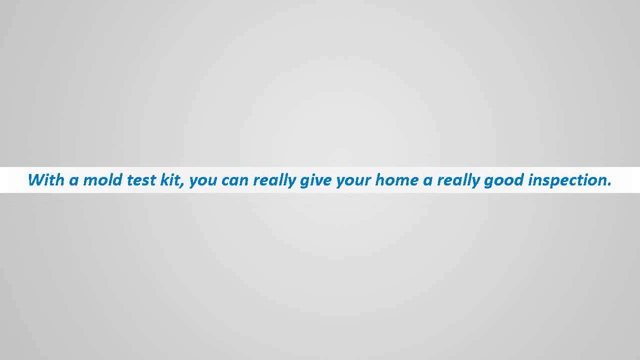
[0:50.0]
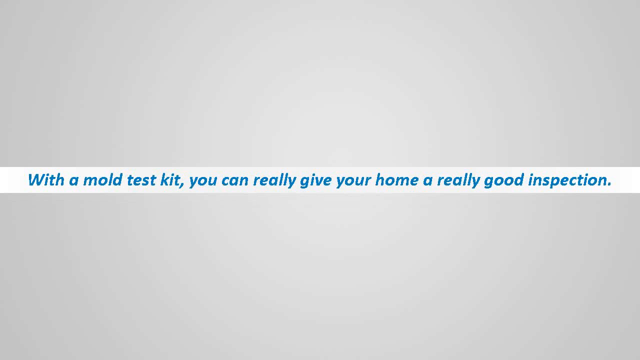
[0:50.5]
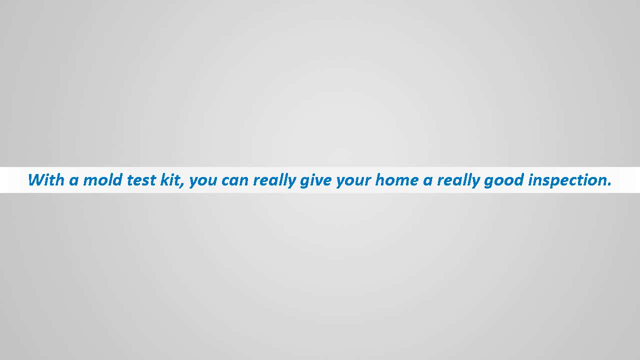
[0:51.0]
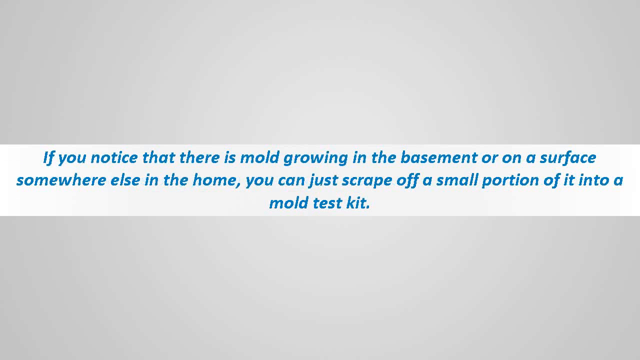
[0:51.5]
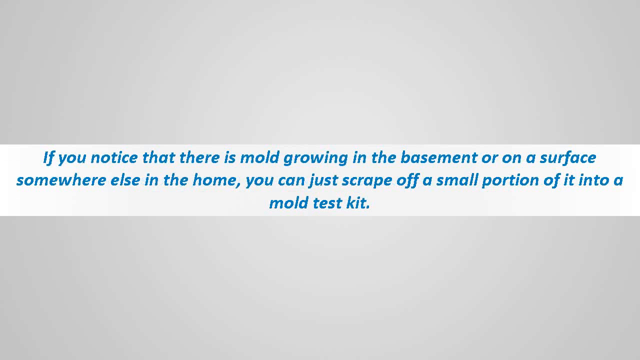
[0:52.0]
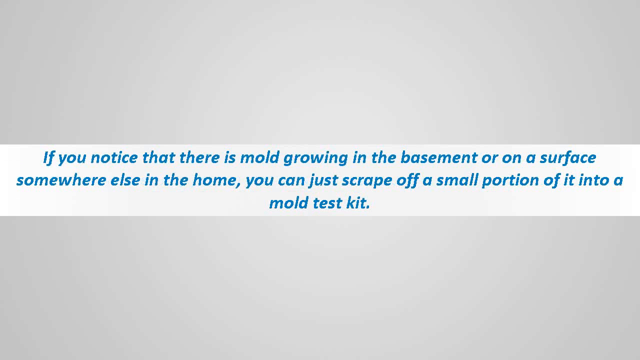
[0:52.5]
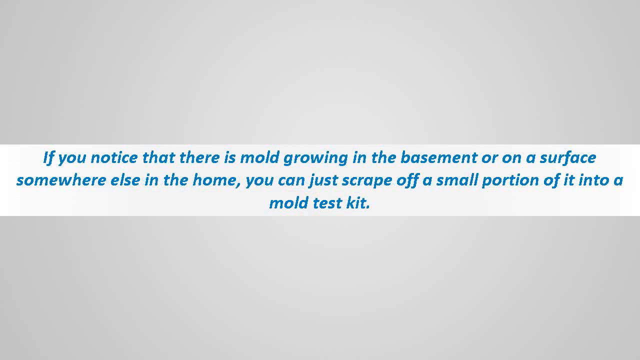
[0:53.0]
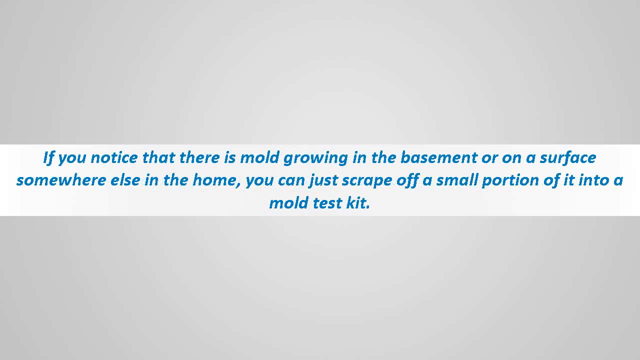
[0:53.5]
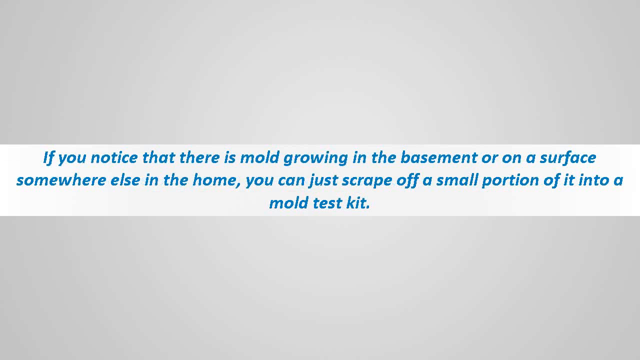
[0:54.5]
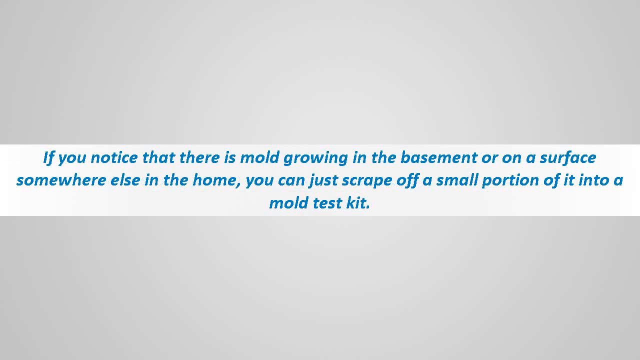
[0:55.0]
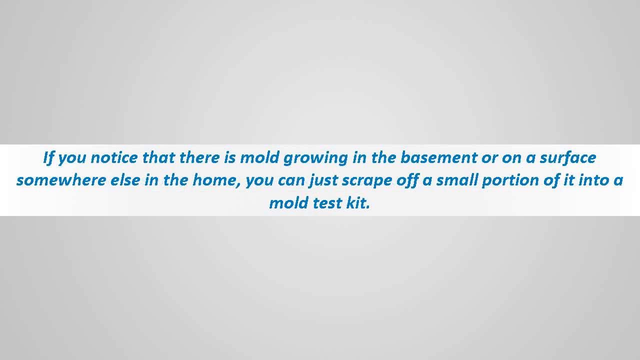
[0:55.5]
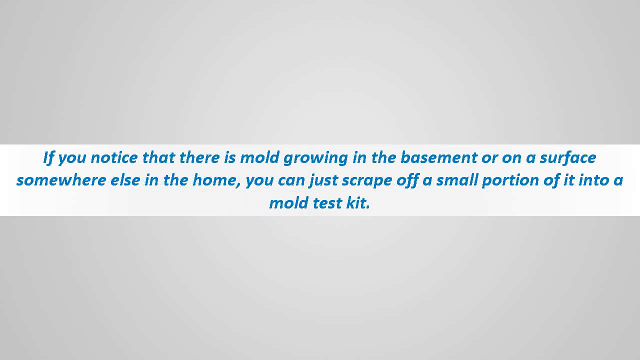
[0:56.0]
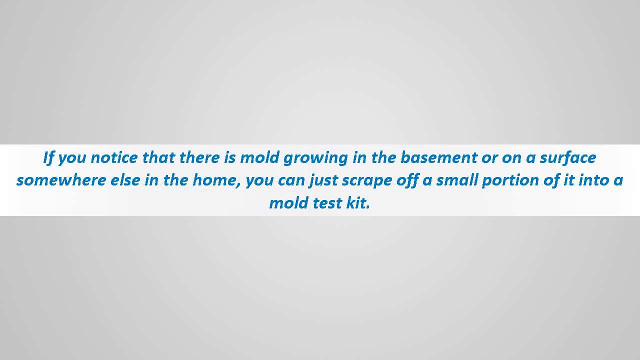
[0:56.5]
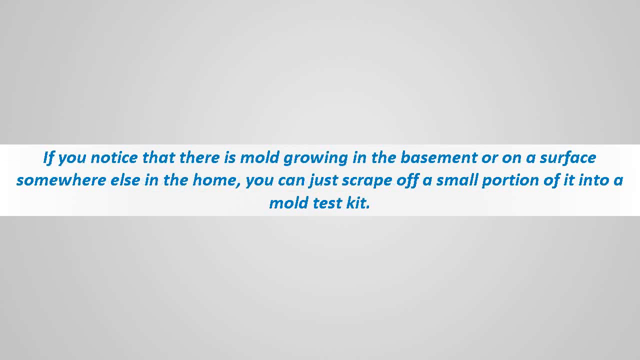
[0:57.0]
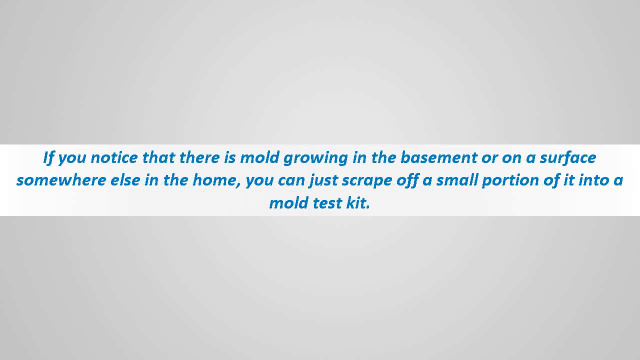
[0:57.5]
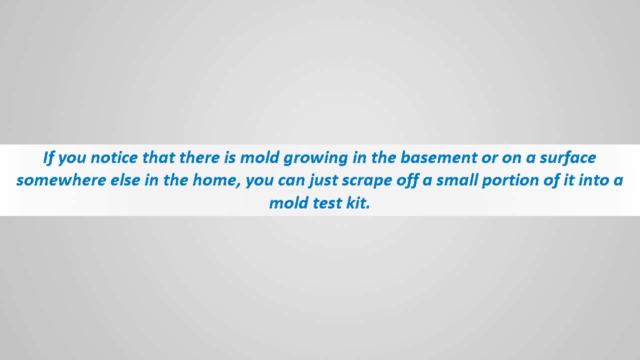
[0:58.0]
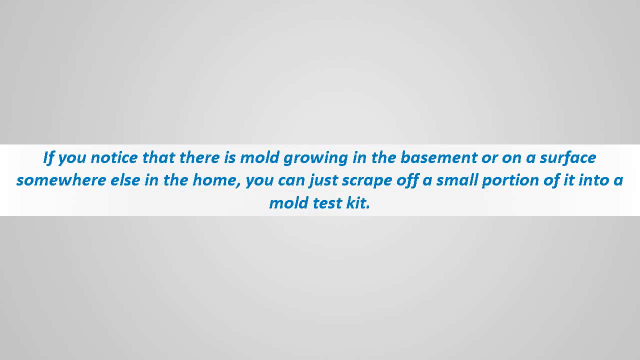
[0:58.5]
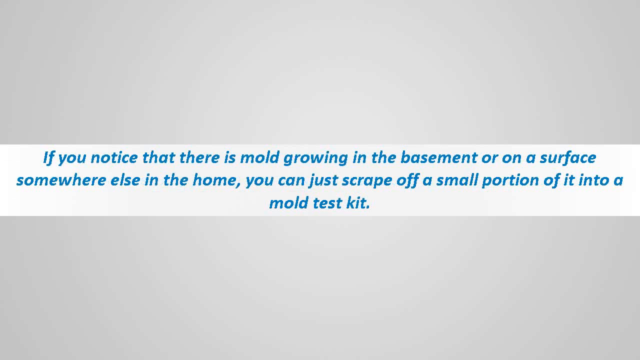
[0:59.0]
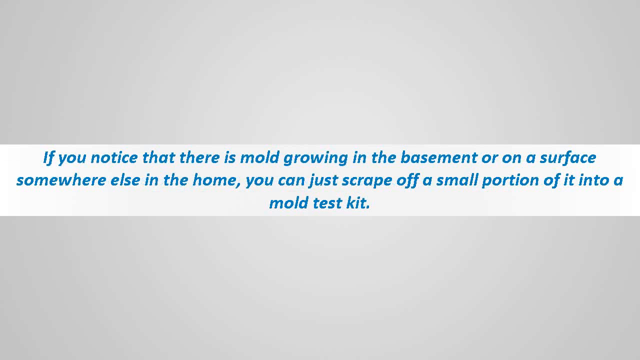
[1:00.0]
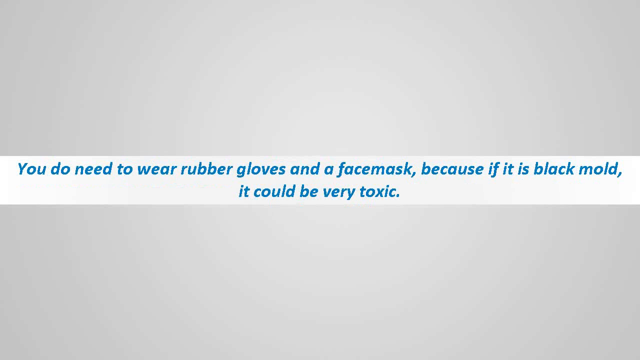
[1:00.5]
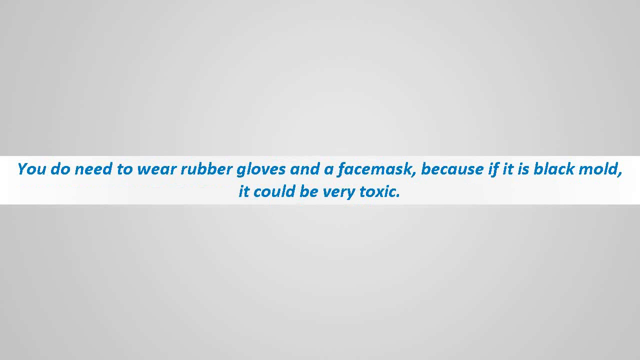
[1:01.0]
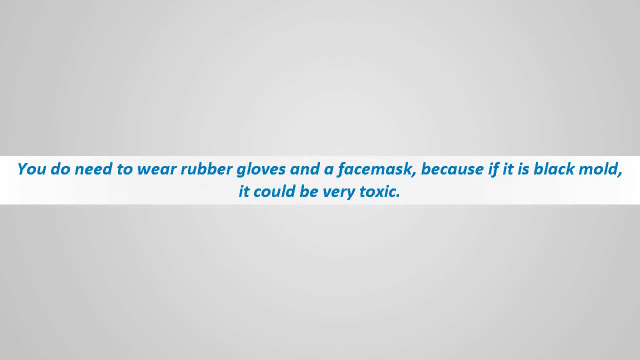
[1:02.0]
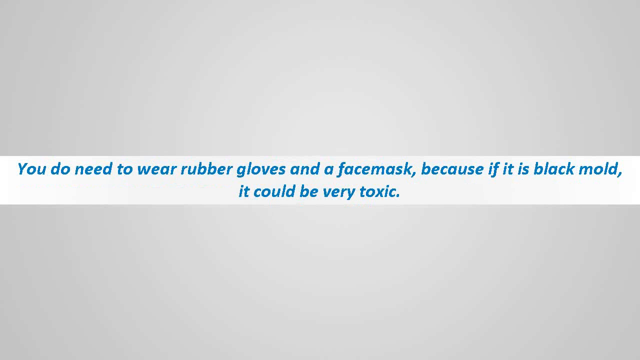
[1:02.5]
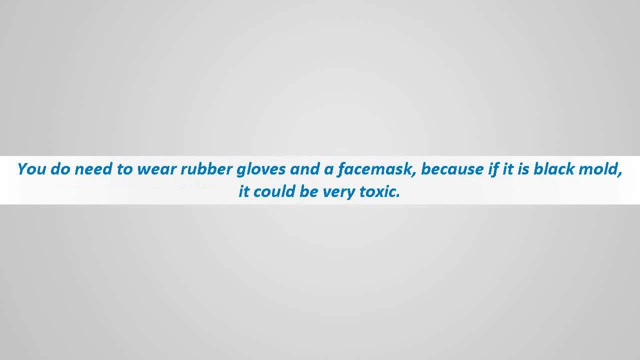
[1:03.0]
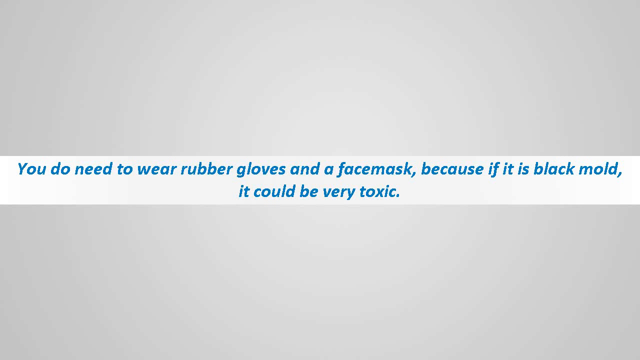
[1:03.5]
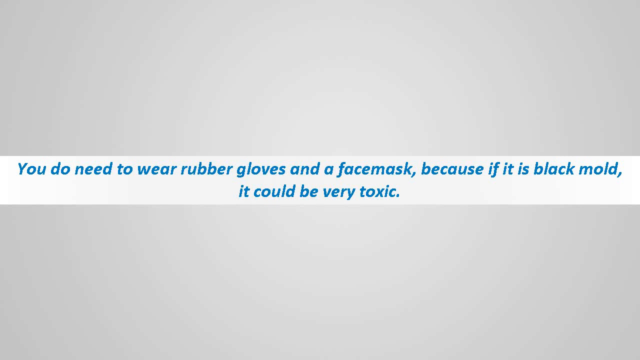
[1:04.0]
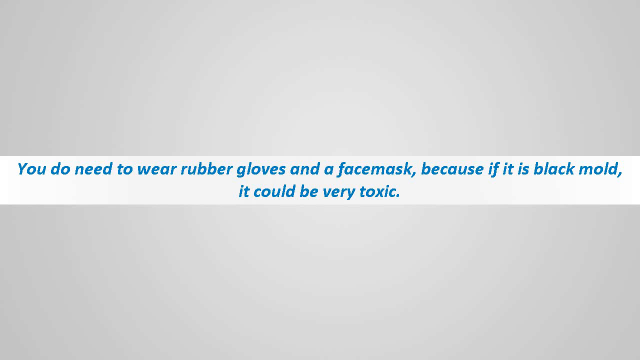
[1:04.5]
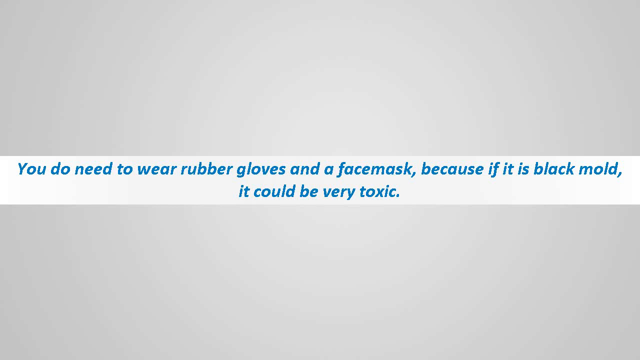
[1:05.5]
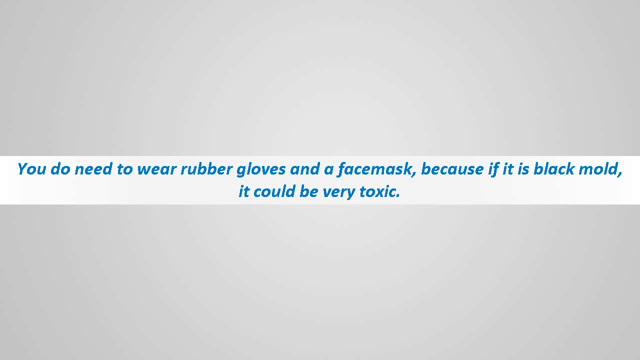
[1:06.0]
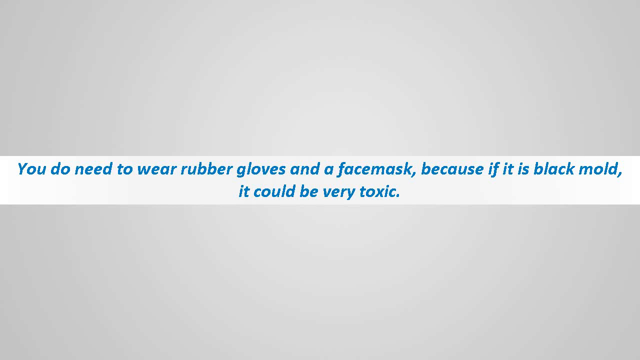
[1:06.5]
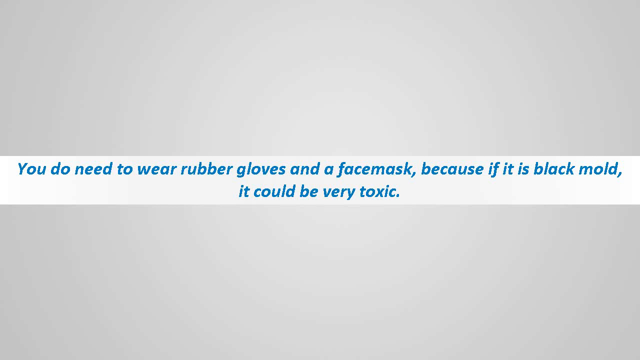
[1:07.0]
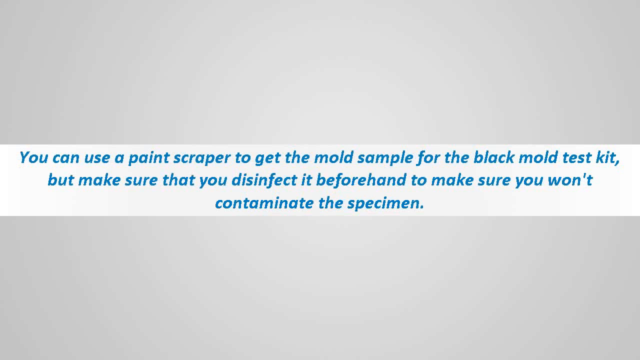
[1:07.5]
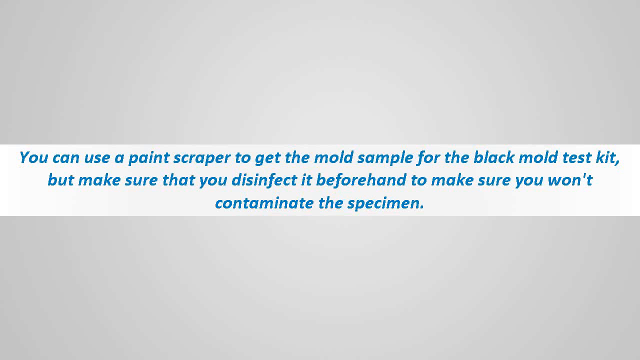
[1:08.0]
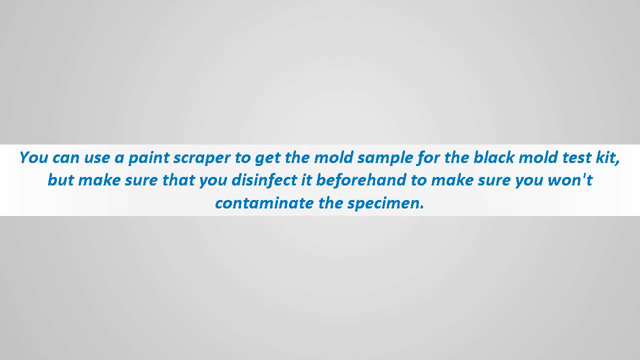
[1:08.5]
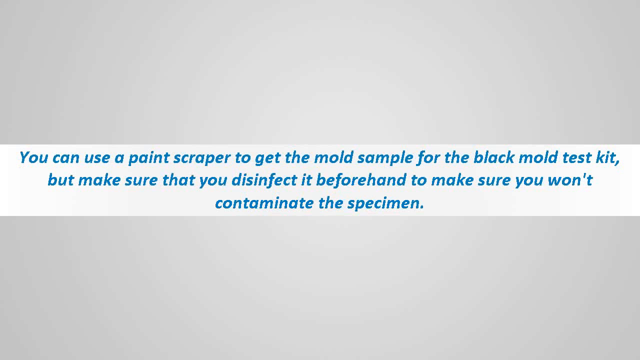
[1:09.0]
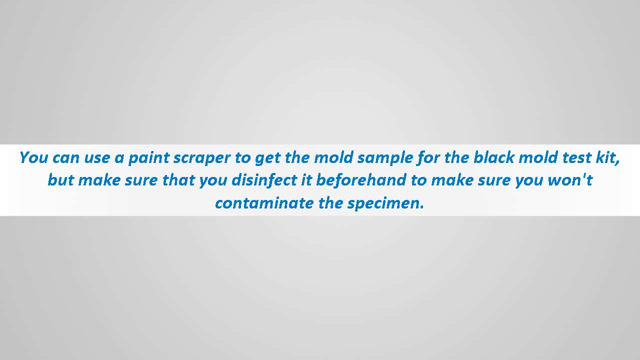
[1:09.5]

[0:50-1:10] The gray background continues, with a white strip or block in the middle containing all-blue text: "With a mold test kit, you can really give your home a really good inspection." More text then appears in the white block: "If you notice that there is mold growing in the basement or on a surface somewhere else in the home, you can just scrape off a small portion of it into a mold test kit." Afterwards, further text appears in the white strip: "You do not need to wear rubber gloves and a face mask because if it is black mold, it could be very toxic."